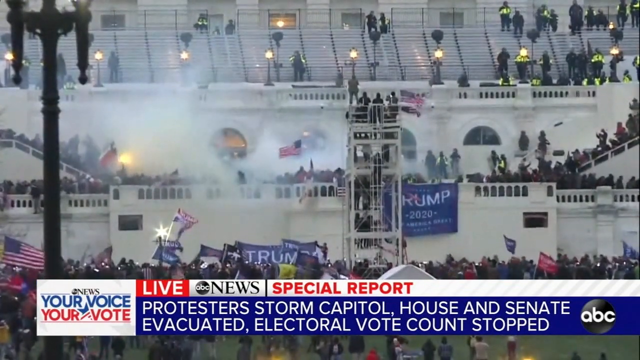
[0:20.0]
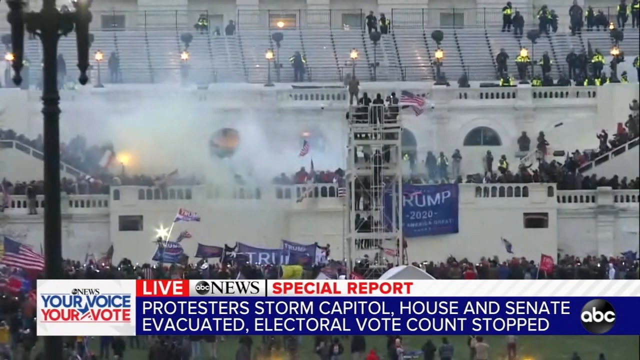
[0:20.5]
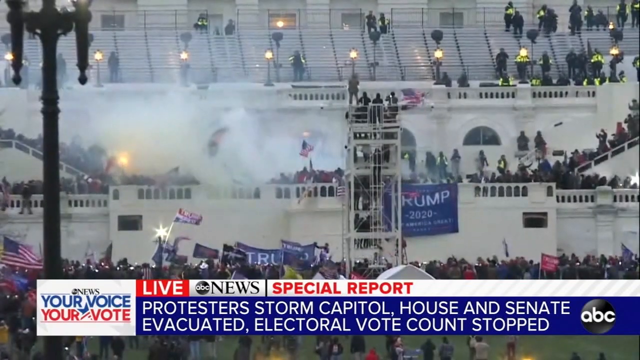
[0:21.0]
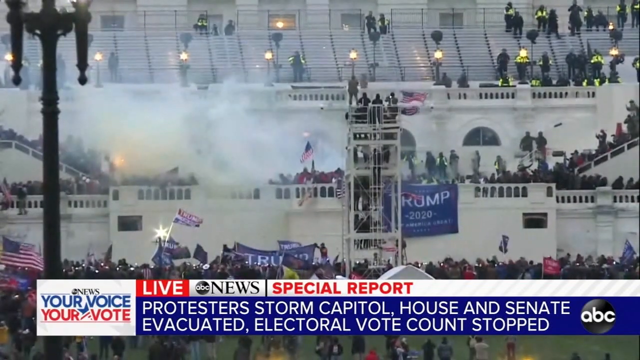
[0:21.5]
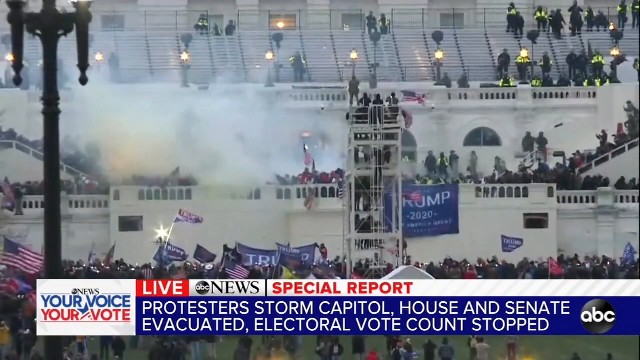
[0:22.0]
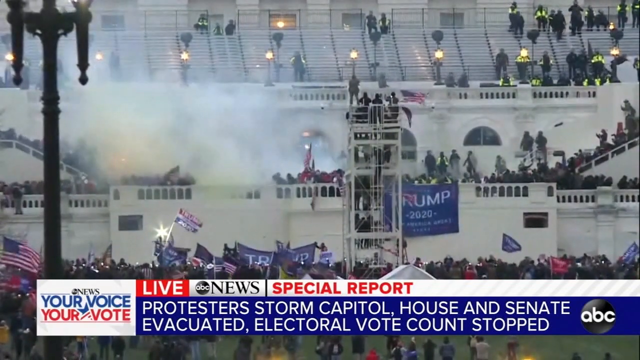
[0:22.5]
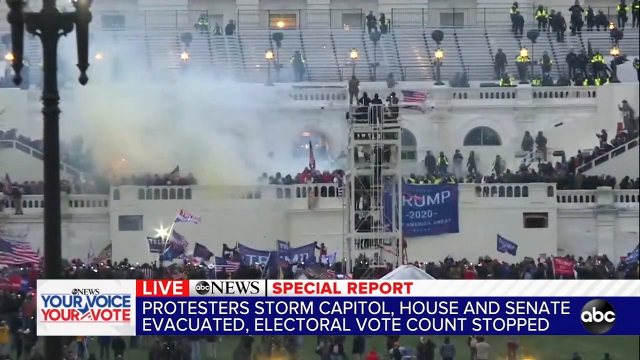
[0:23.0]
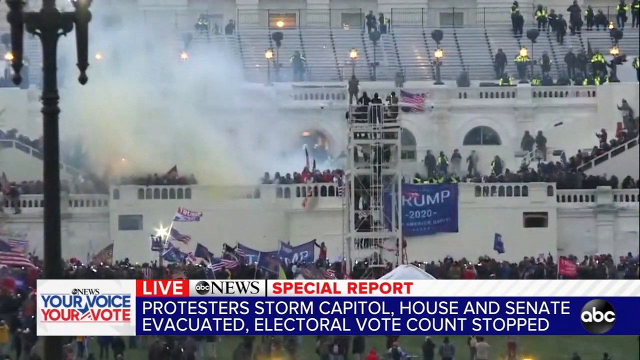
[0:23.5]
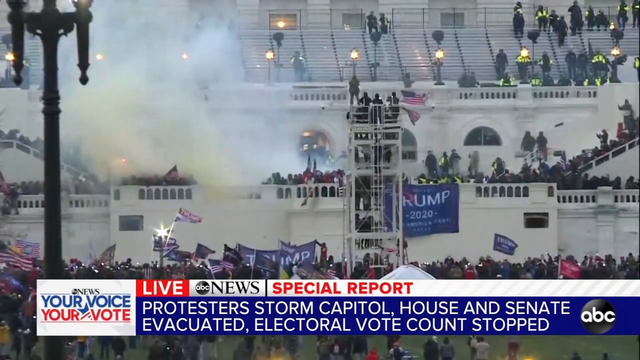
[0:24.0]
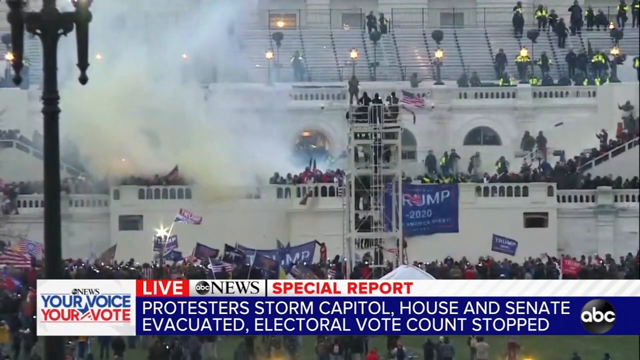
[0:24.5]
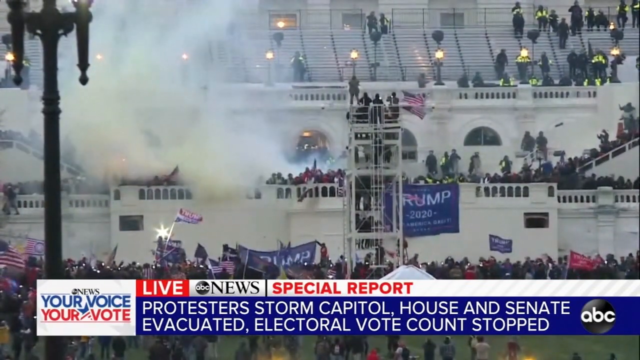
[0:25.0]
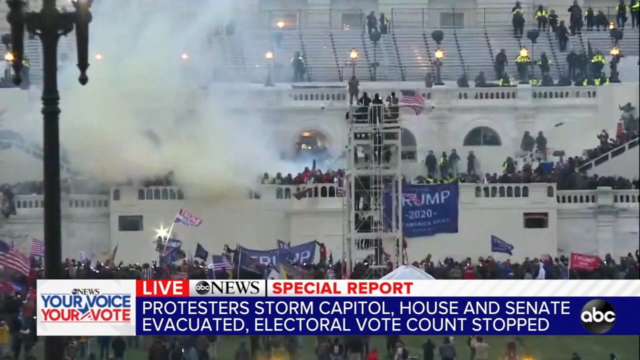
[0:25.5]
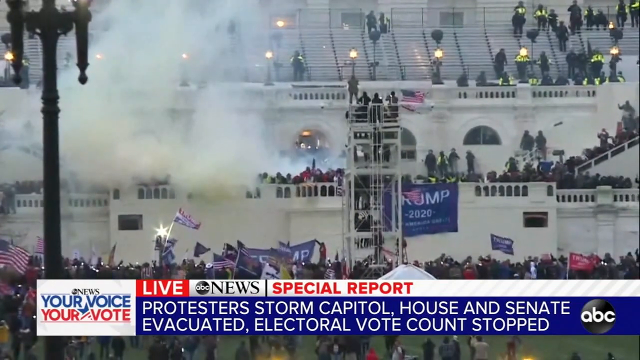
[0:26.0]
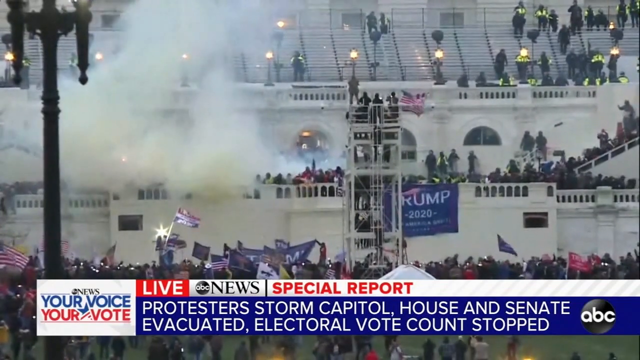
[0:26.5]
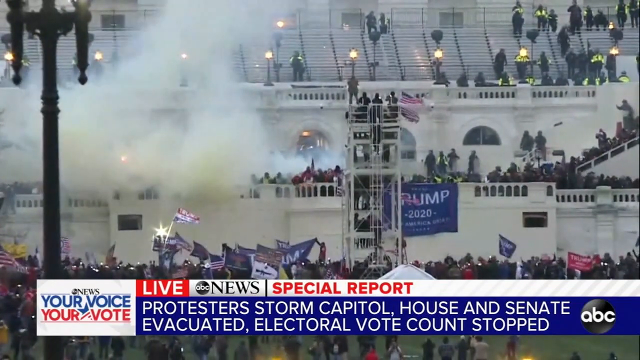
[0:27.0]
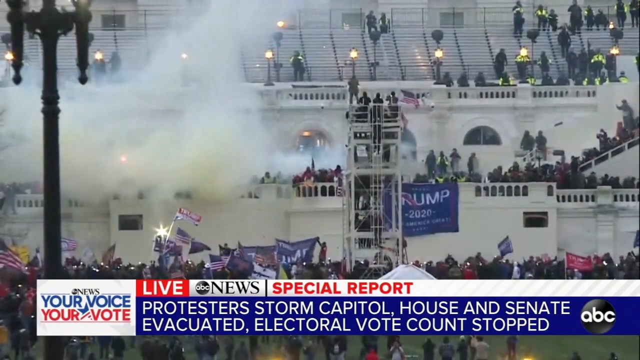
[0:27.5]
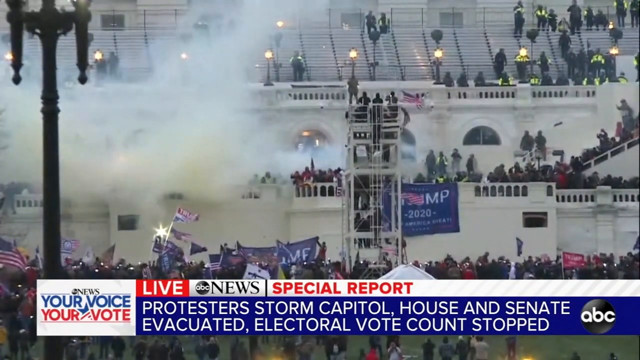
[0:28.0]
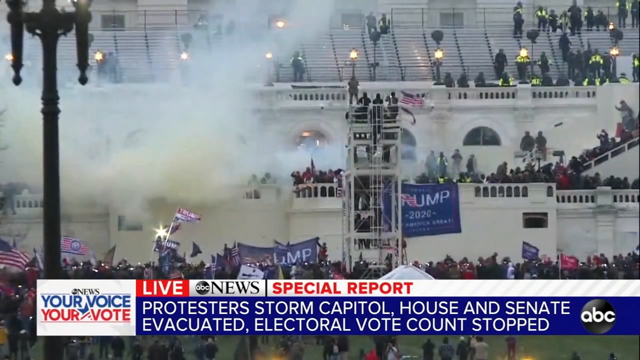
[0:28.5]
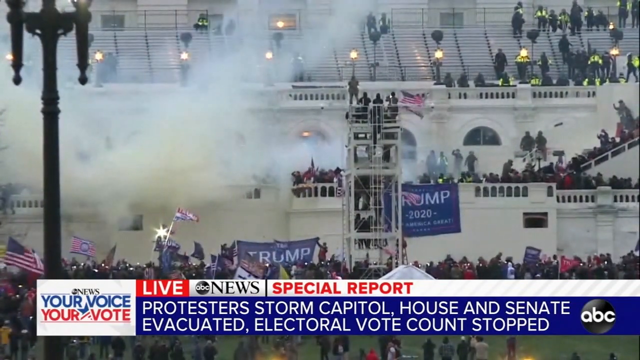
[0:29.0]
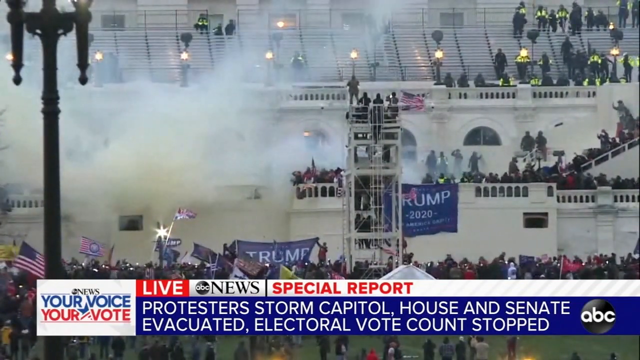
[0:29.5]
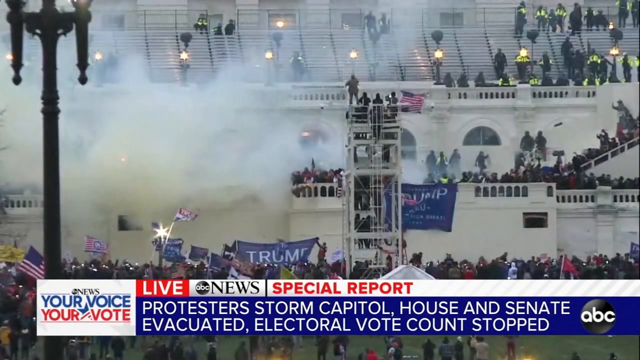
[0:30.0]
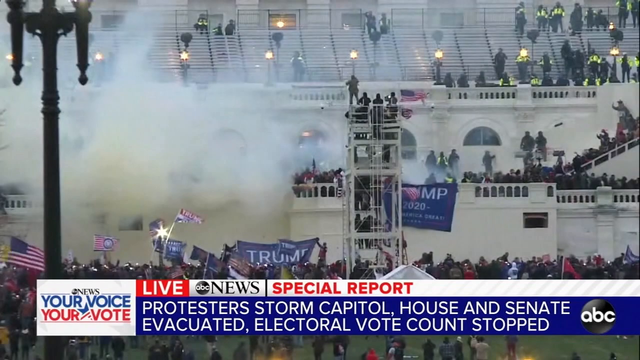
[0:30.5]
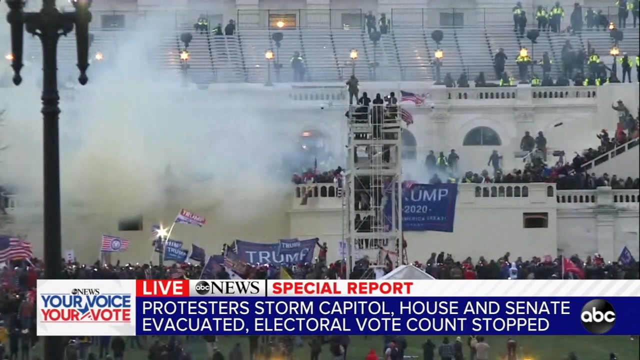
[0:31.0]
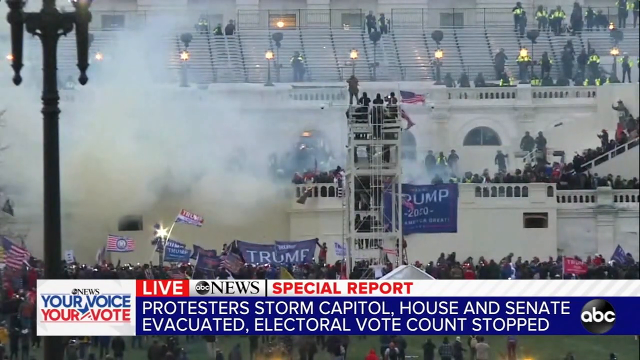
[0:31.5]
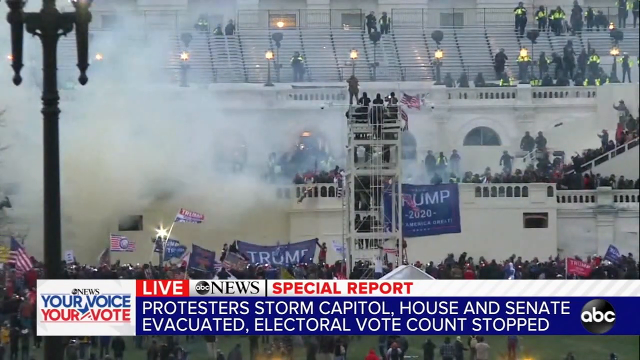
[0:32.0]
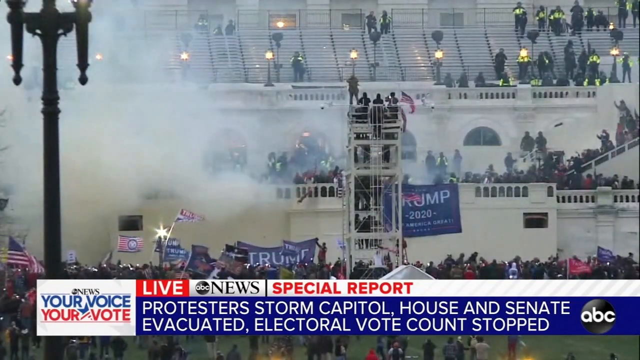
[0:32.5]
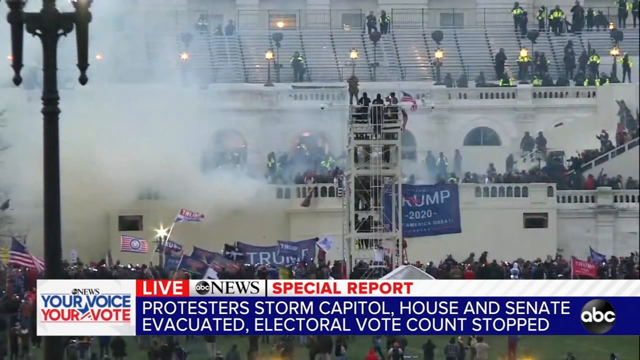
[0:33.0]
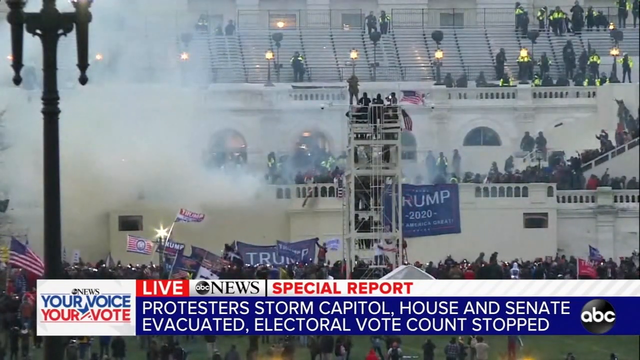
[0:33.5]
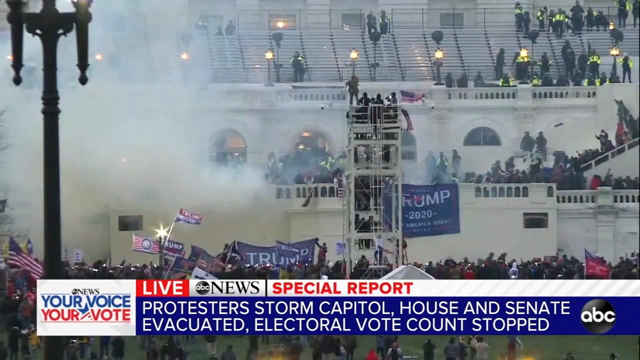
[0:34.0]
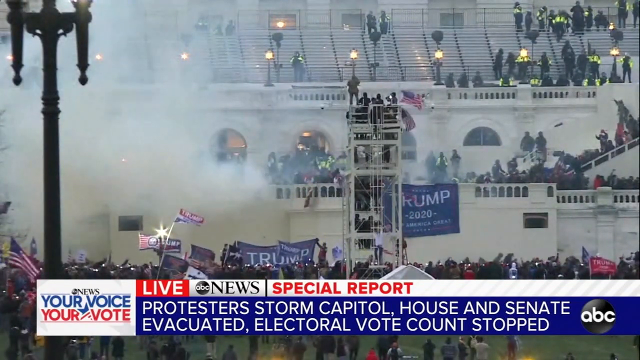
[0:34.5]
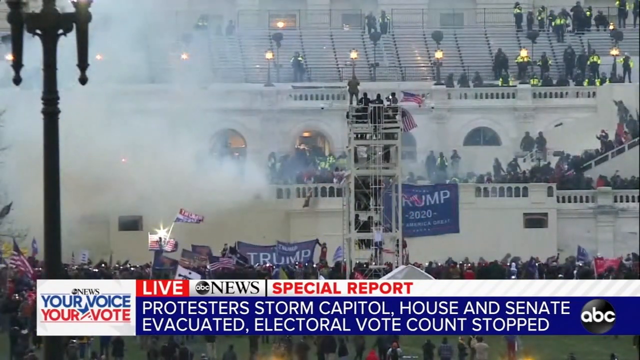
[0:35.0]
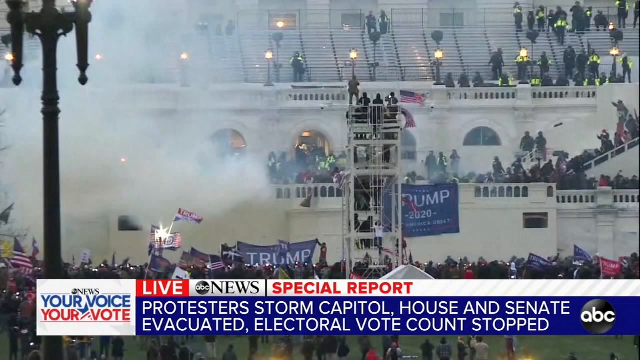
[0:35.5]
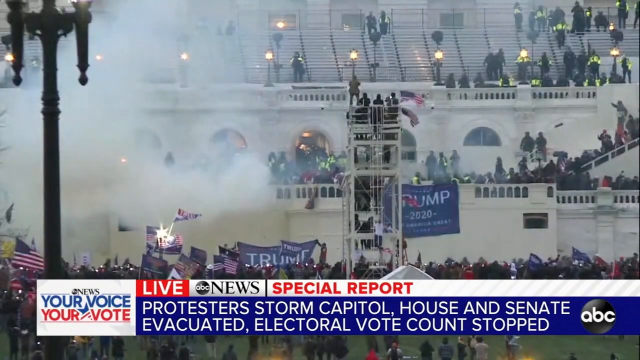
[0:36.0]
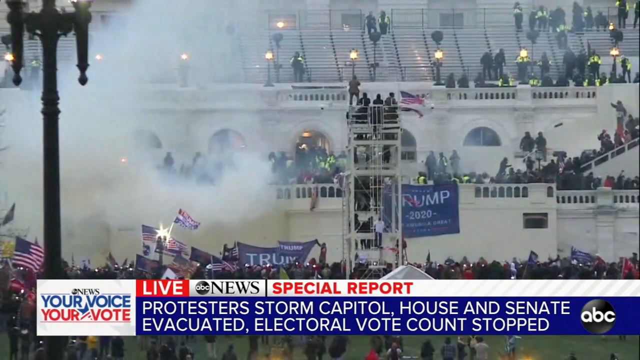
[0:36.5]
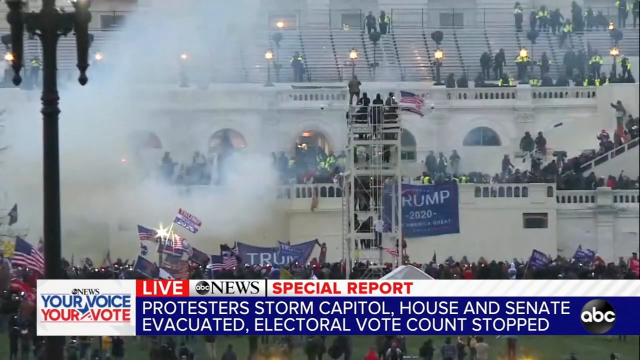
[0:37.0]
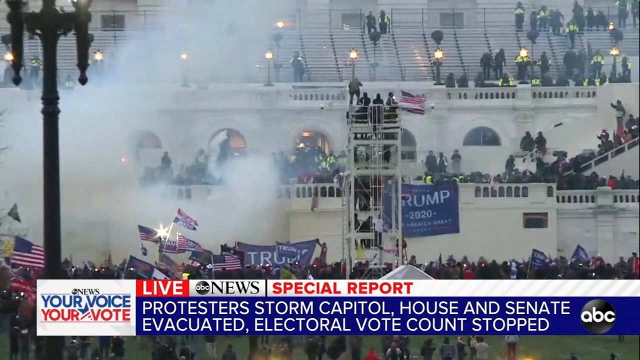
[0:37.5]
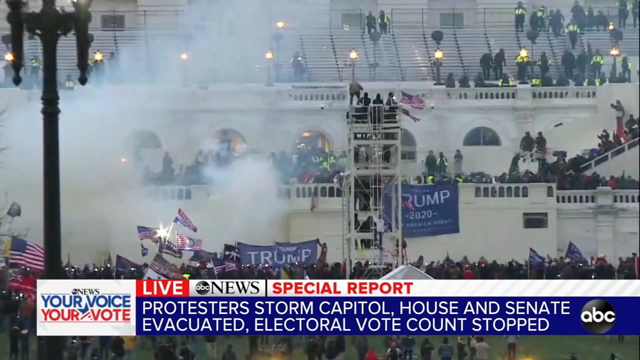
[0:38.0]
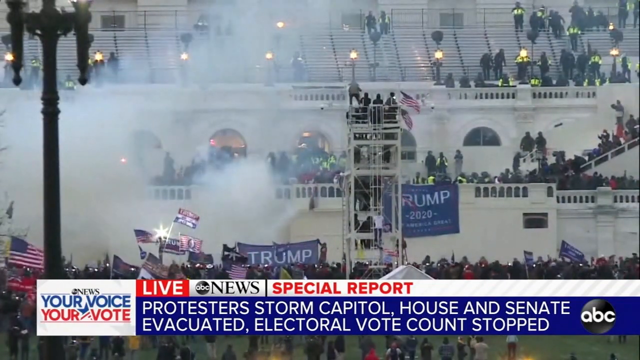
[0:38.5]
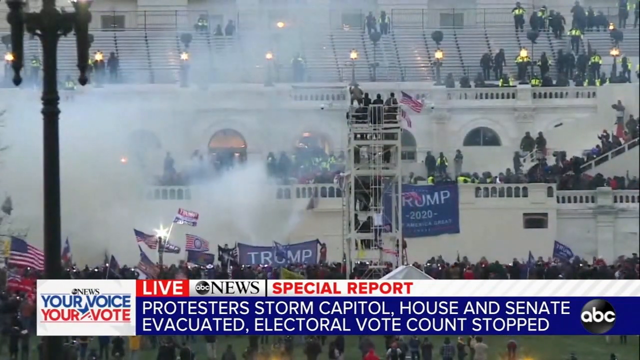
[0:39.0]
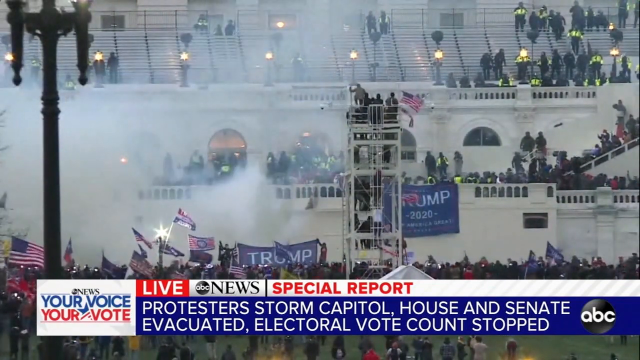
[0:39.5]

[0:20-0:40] People are trying to get in, and some are falling as they try. Police are on top, watching the situation. Some protesters hold a flag up, and some hold postcards. The protest is taking place outside.